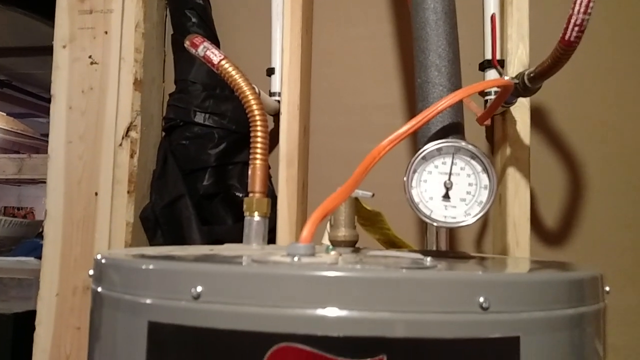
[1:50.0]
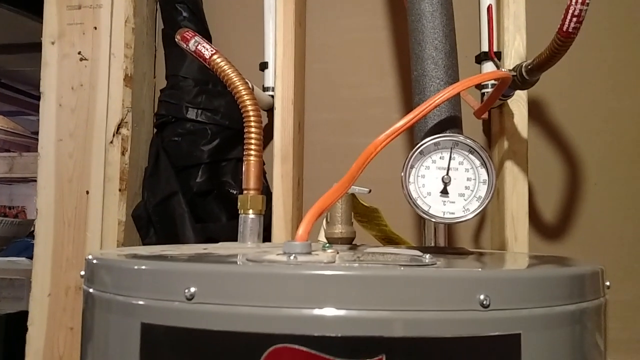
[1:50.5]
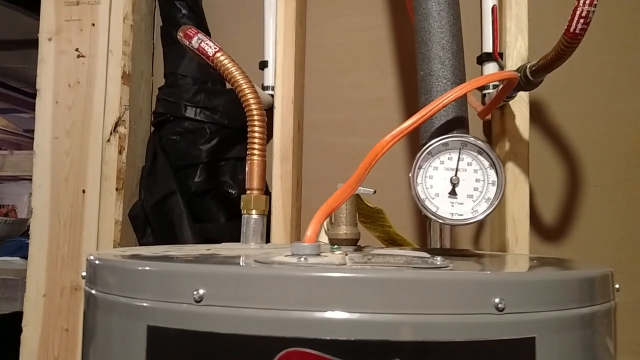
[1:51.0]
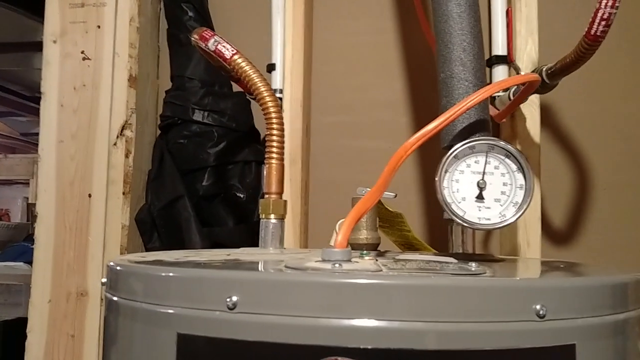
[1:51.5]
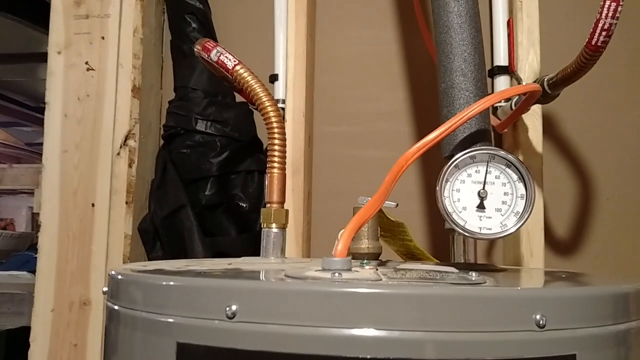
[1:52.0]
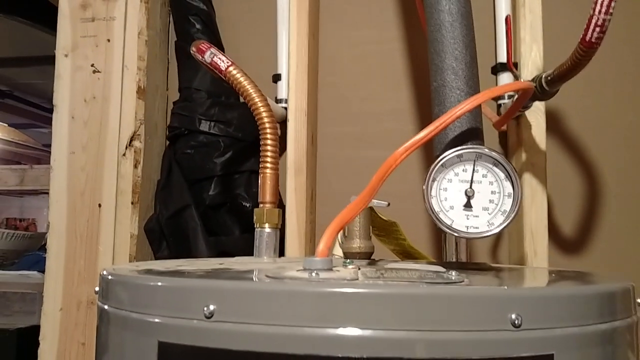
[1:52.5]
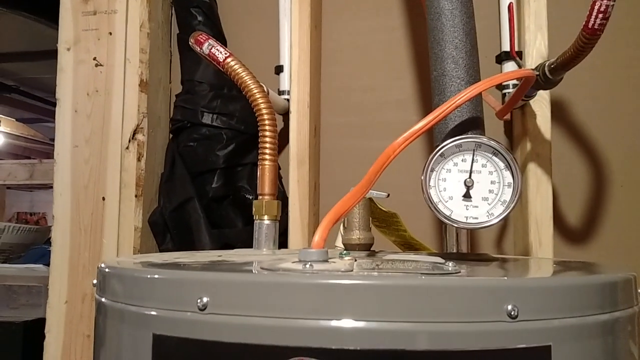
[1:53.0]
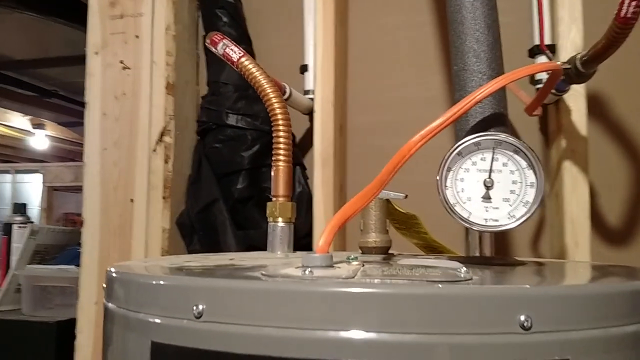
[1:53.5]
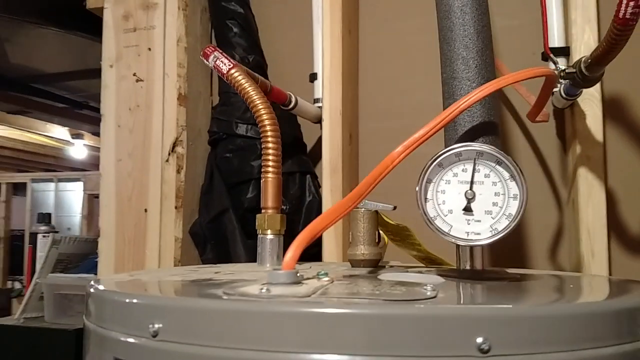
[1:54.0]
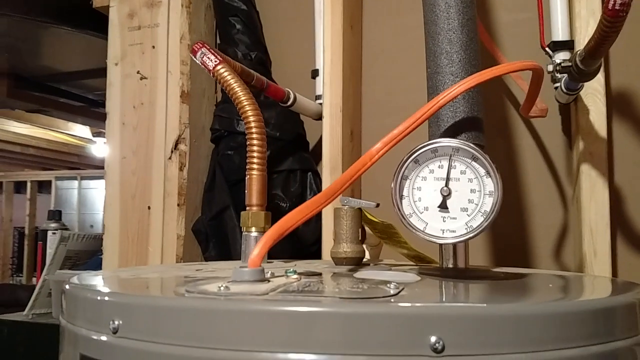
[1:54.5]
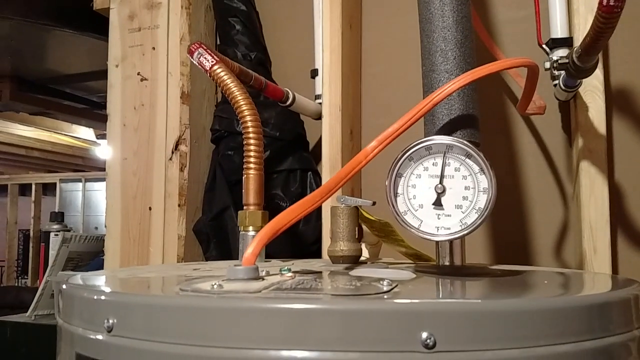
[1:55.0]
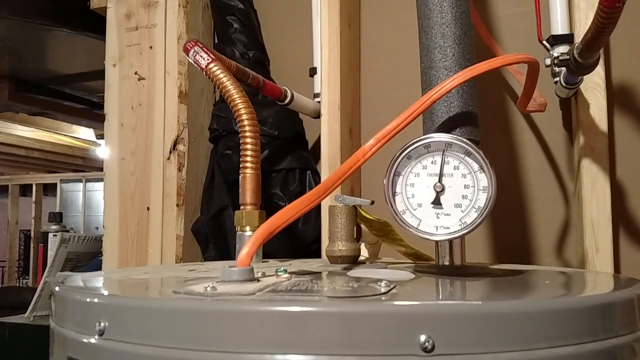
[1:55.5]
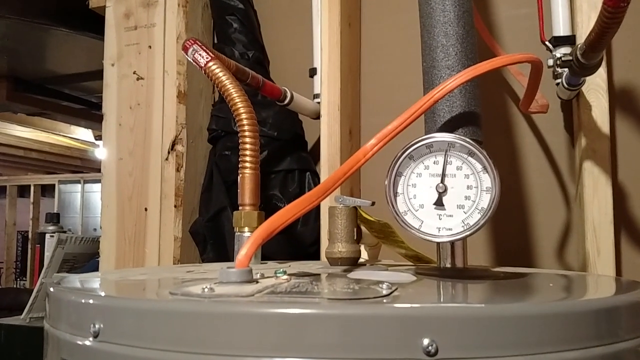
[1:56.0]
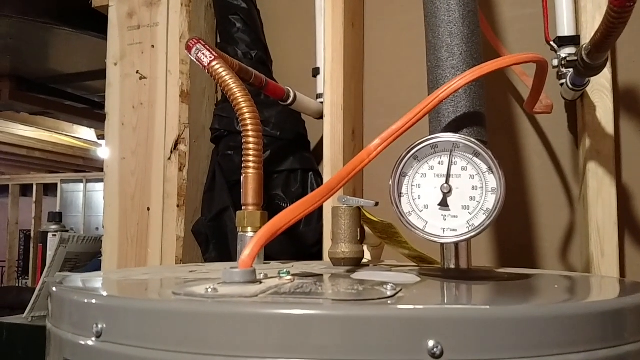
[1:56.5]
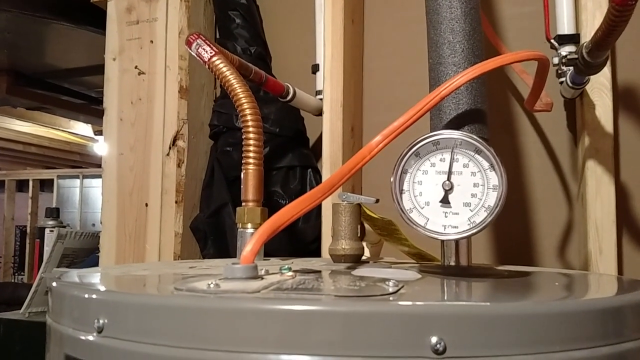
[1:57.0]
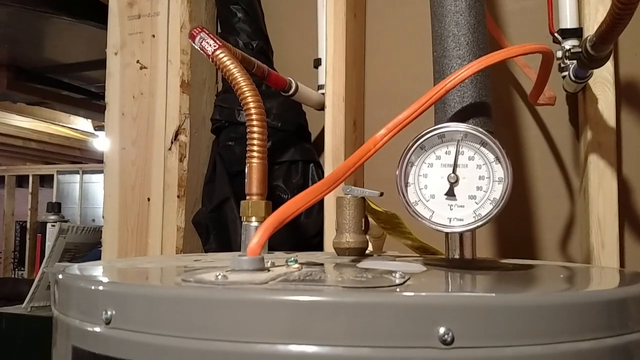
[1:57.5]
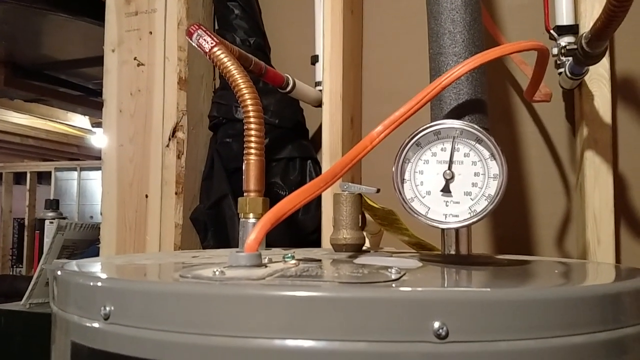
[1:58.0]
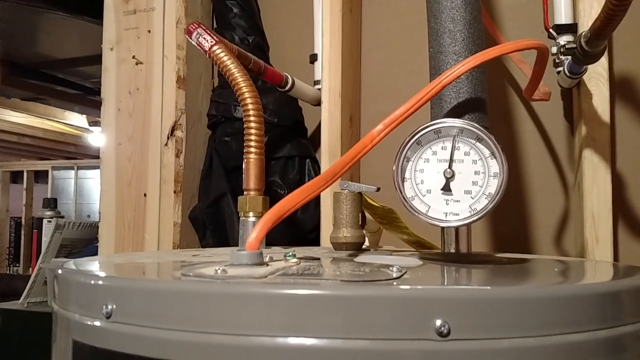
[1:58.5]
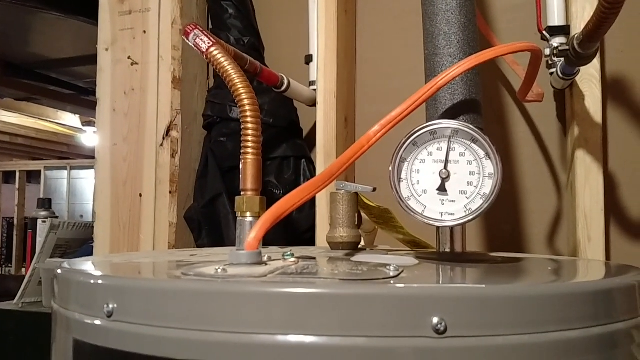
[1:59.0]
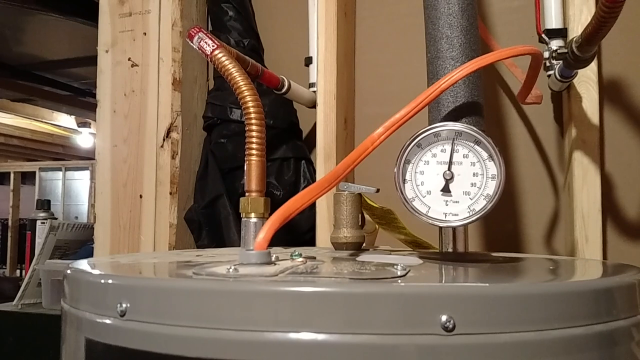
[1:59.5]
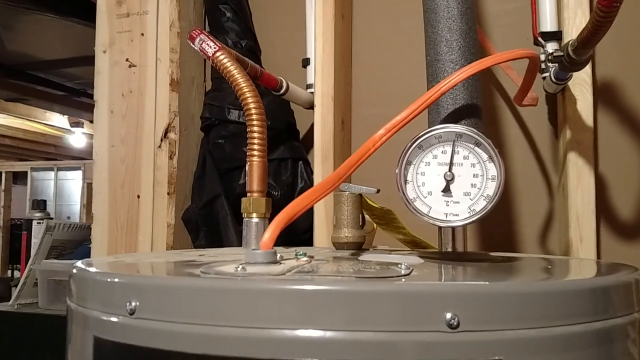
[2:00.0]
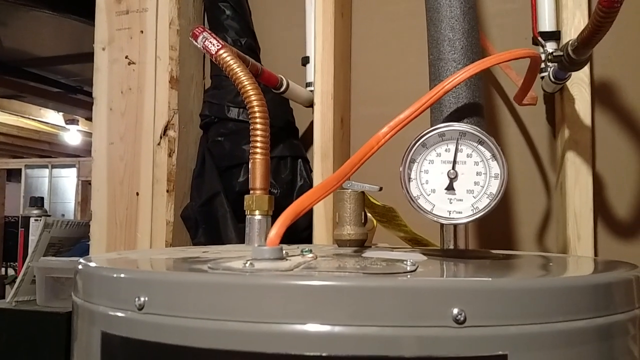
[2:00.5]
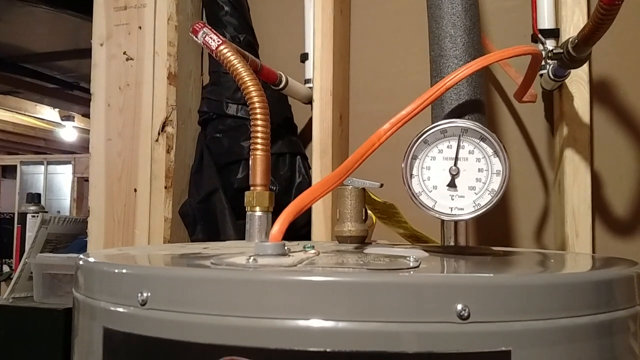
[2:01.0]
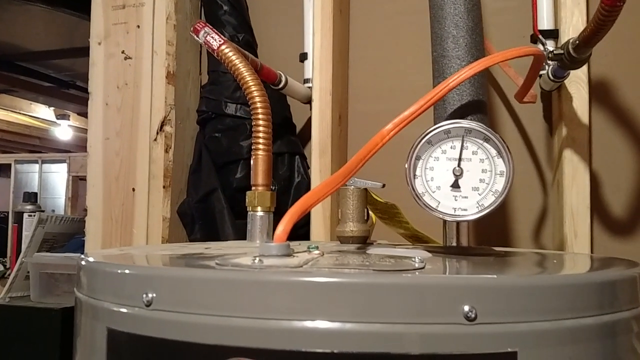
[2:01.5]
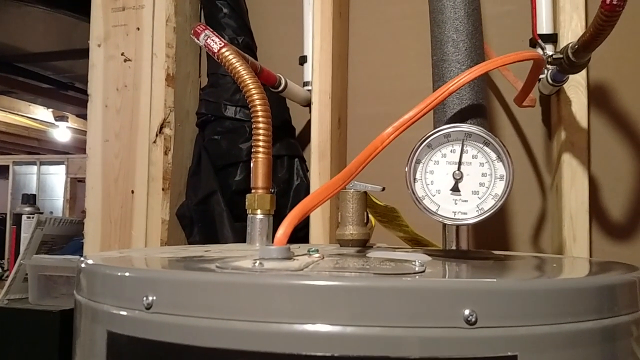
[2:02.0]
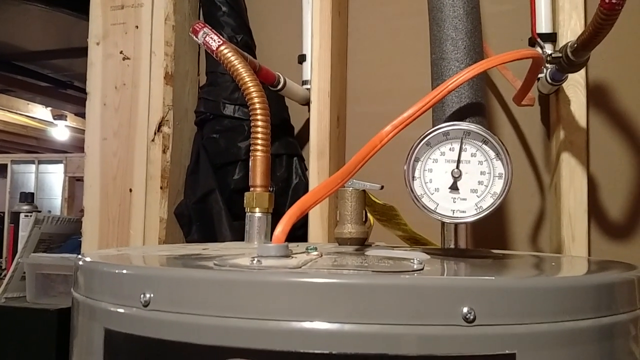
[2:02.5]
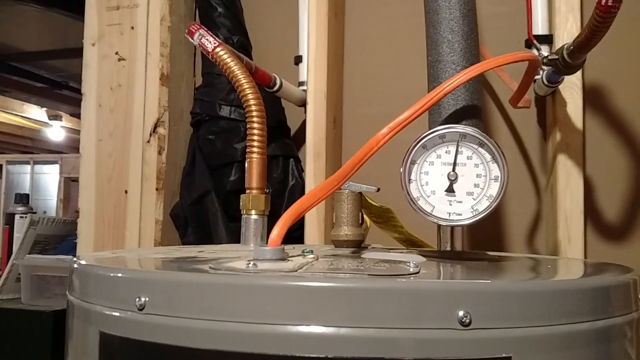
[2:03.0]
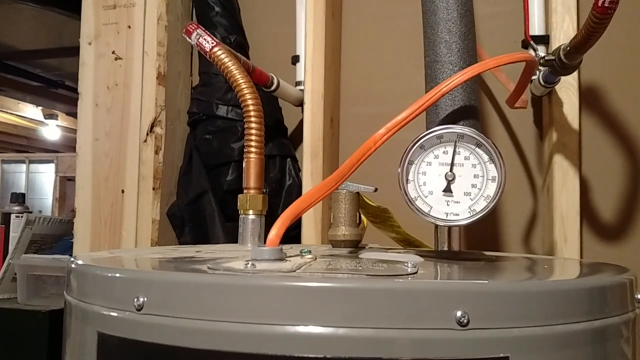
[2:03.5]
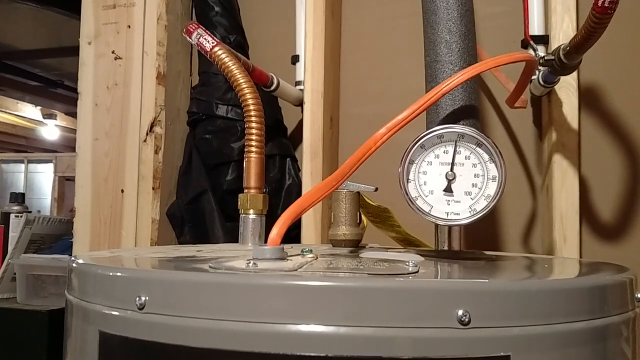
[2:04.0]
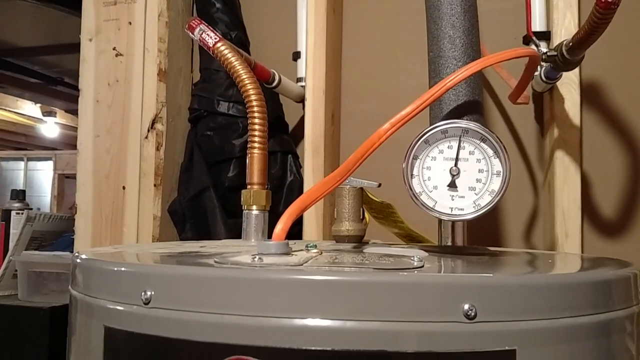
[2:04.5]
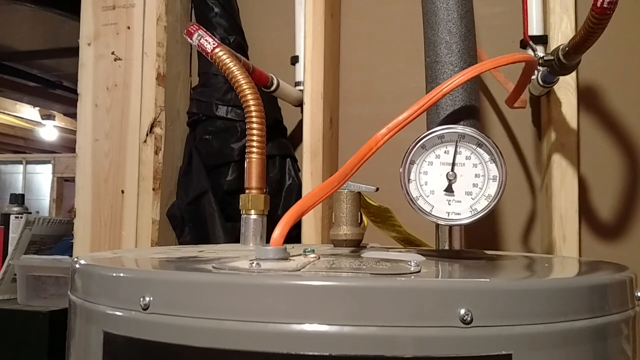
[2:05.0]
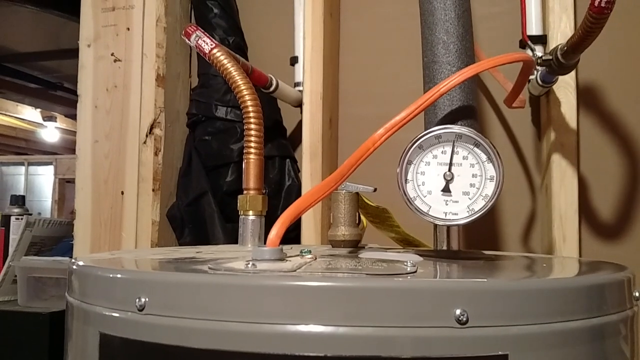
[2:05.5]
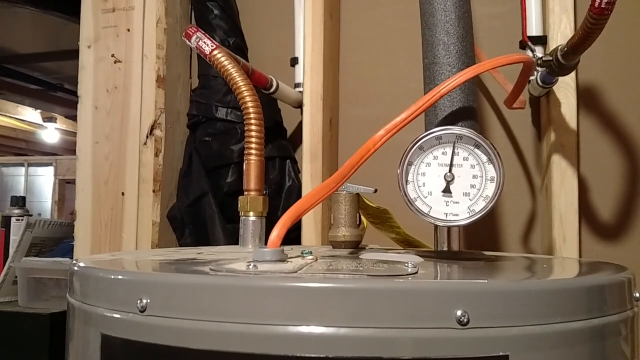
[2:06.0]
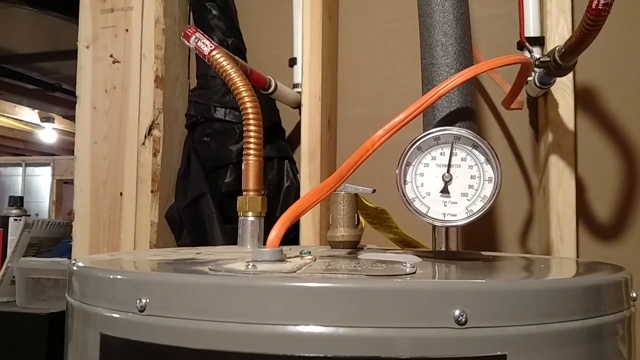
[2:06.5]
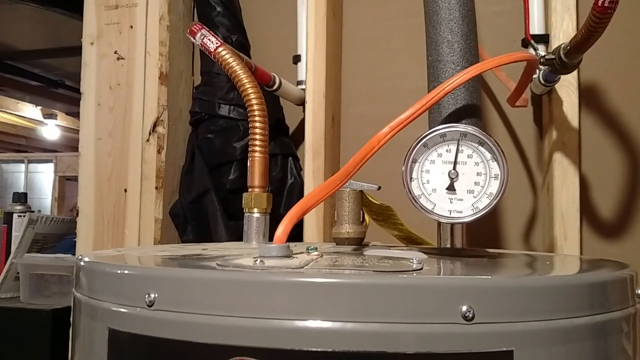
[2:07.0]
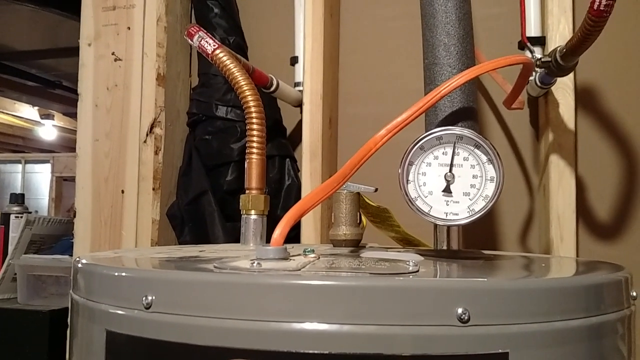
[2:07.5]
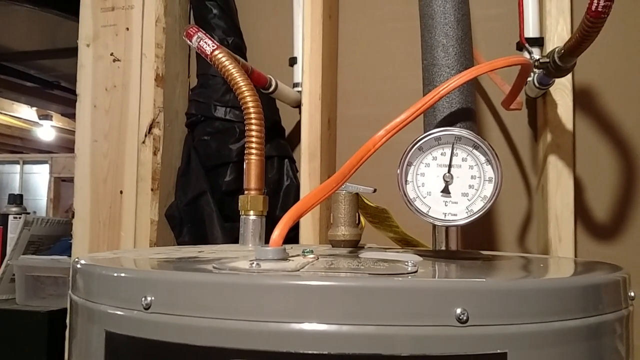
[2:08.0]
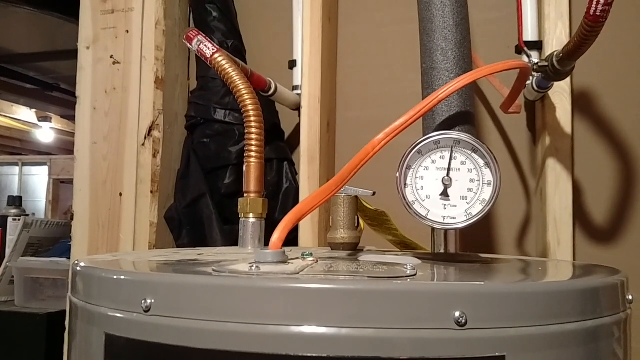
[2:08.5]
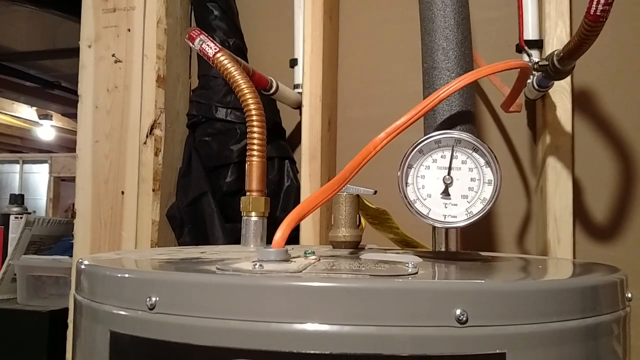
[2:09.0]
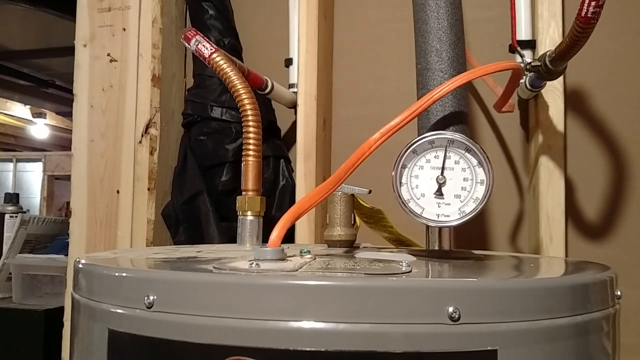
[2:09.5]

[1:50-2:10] A black fireplace that looks like a very old model is in a dirty room that seems to be a warehouse and is not well kept. The camera is very shaky. It goes to the back, showing copper pipes connected to the back of the fireplace that run way up to the roof, where there is a medium-sized tank that looks like the energy source; pipes run from the tank back to the fireplace. The camera then moves a short distance within the warehouse to a well-lit space with a second tank. The second tank is gray and has a few cables on top, two of which look like copper cables, and there is also a watch on top.